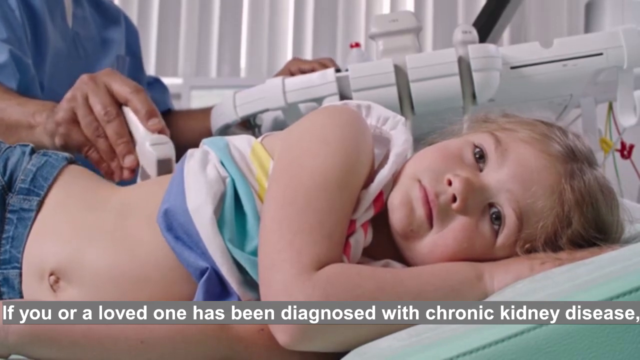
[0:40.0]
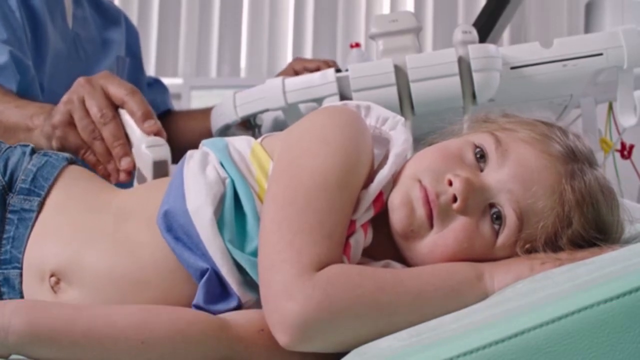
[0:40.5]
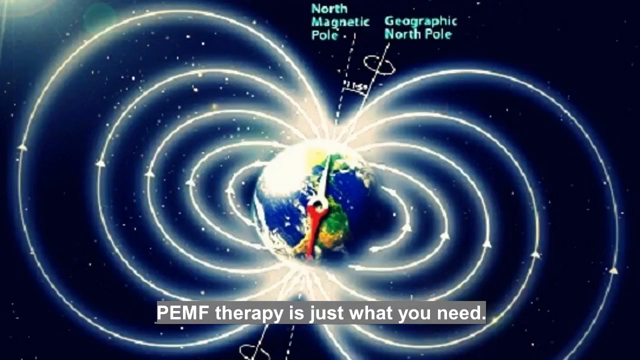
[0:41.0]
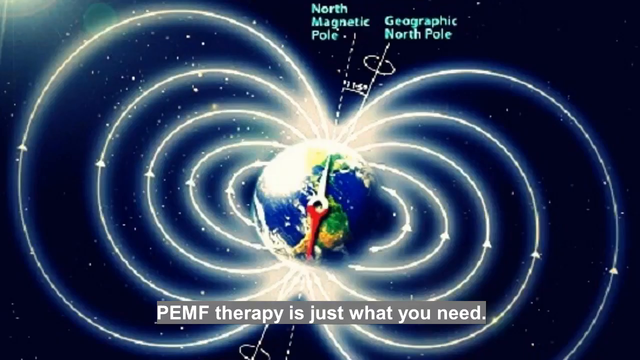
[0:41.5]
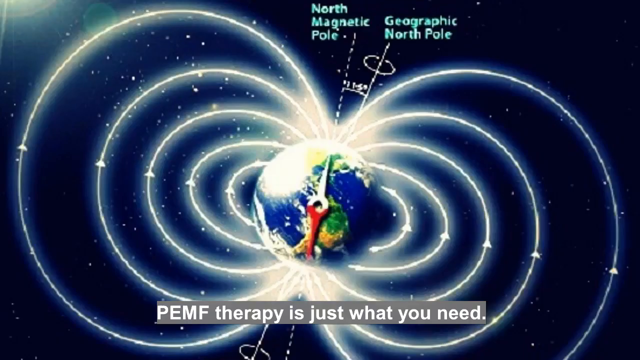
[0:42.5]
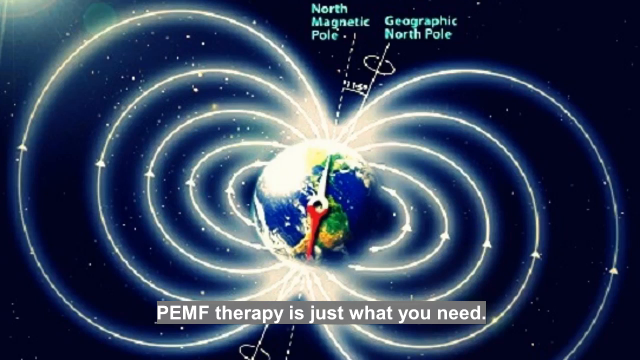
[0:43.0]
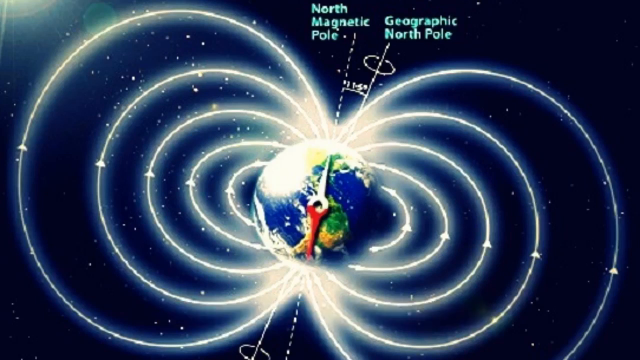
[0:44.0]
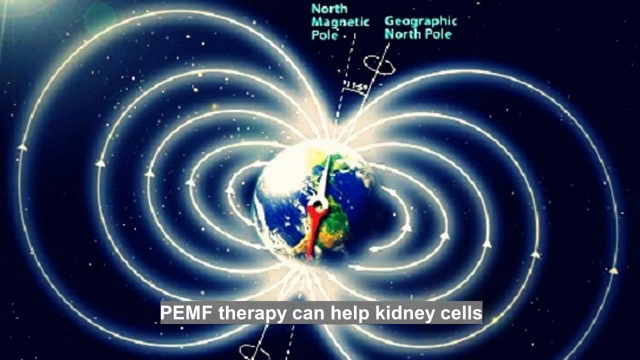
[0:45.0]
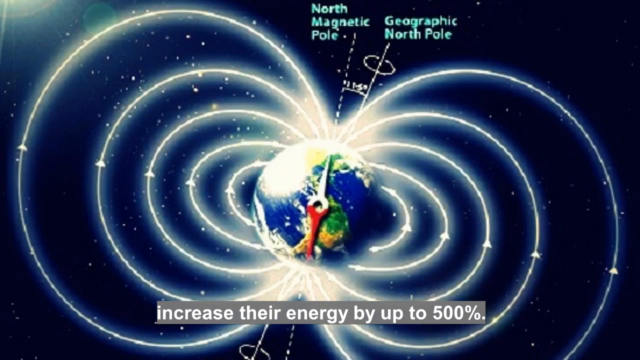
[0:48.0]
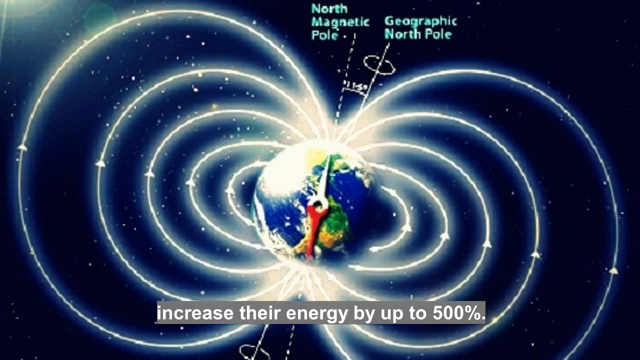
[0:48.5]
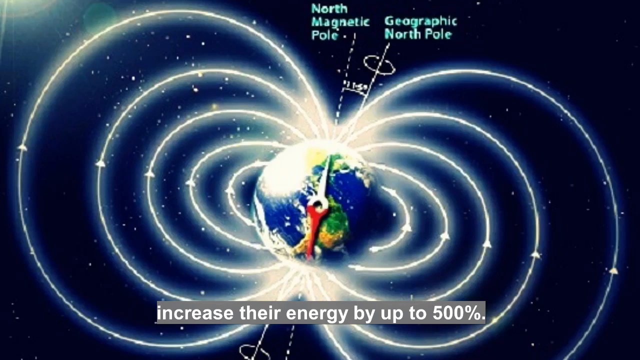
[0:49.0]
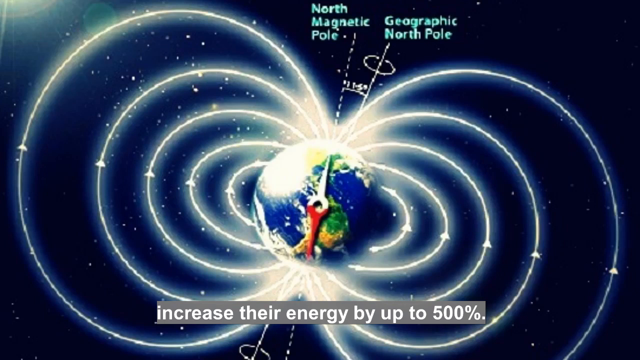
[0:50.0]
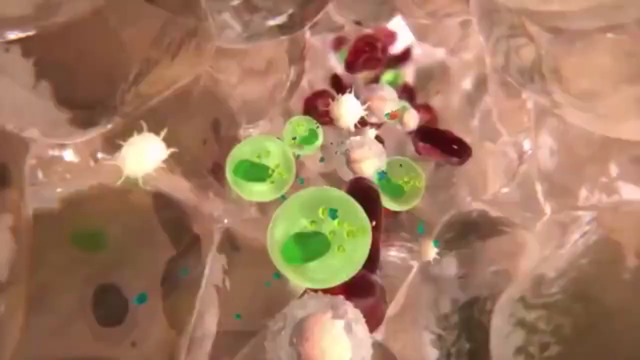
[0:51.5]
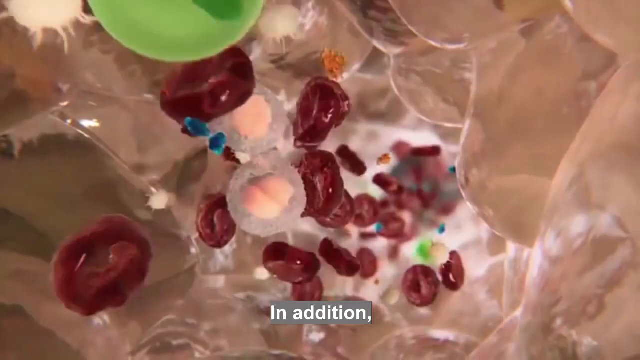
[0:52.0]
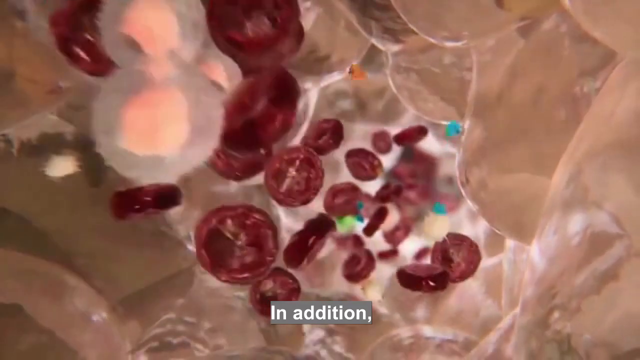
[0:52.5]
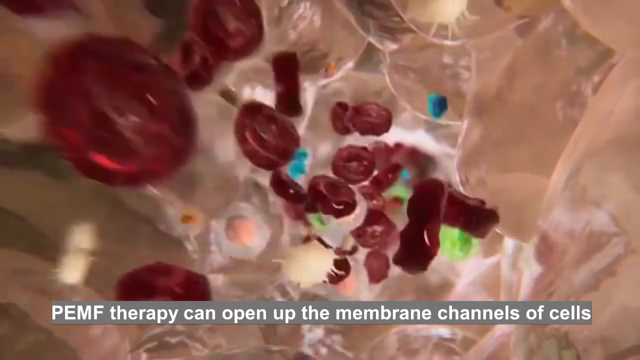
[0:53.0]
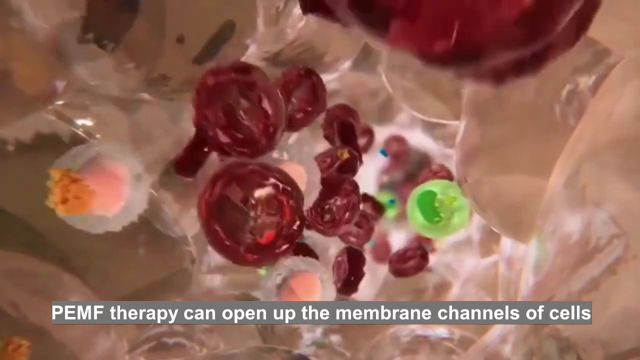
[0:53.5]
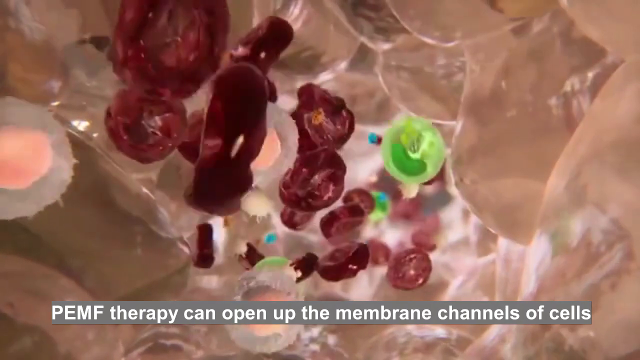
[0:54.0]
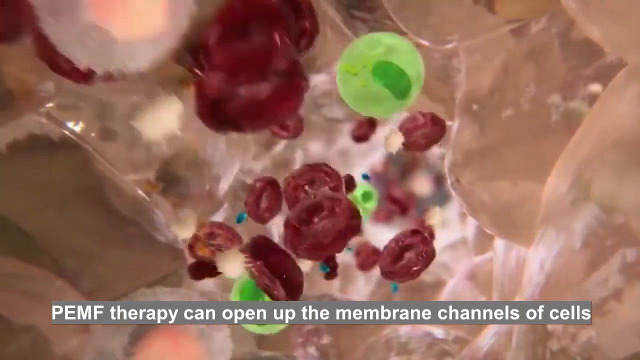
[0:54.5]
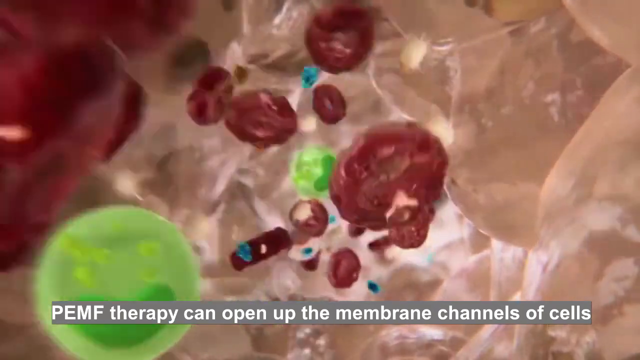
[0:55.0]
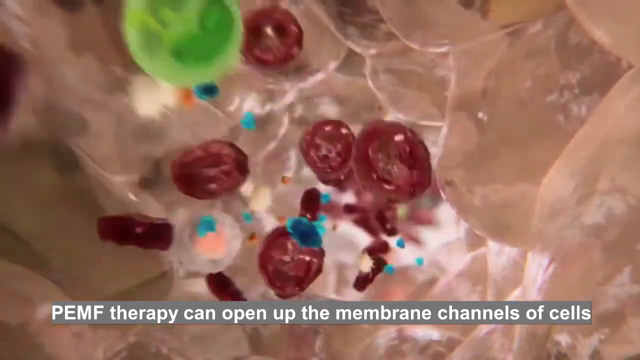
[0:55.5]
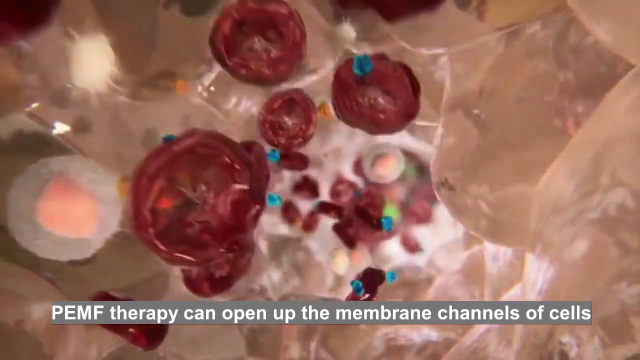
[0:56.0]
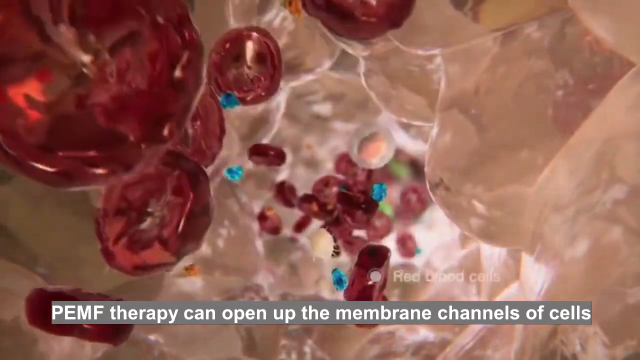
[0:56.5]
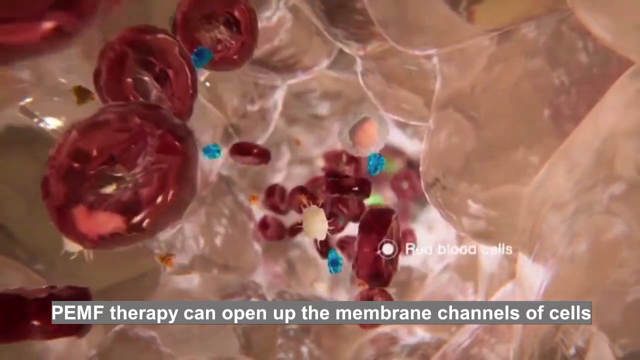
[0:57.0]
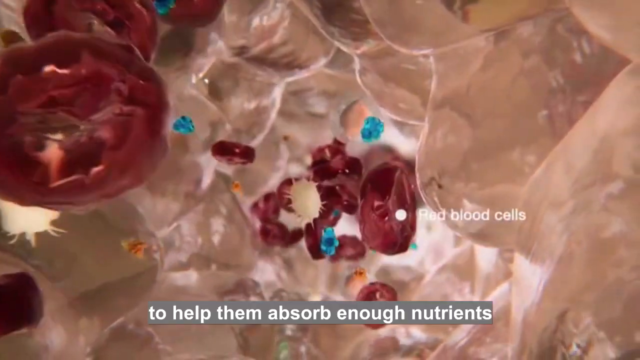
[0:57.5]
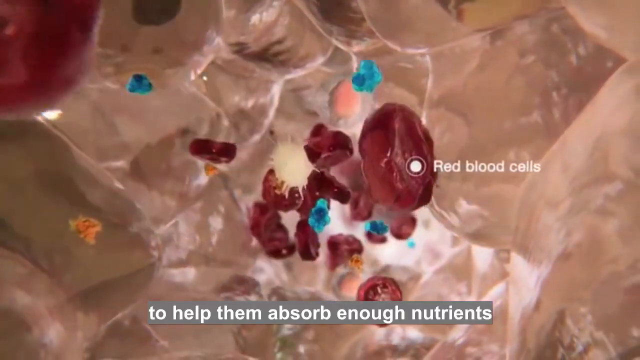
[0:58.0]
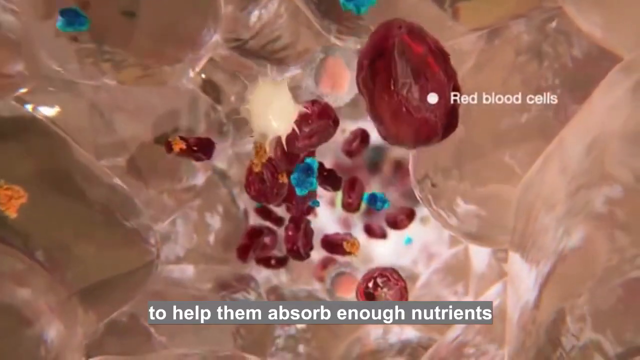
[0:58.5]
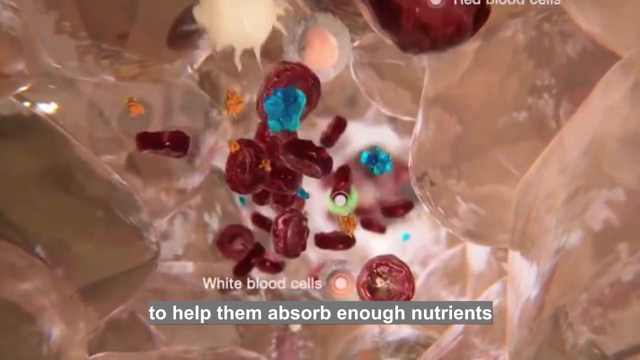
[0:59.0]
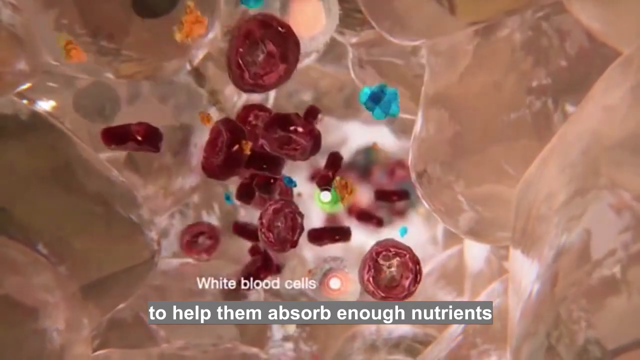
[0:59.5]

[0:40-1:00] The white child is still lying on their side, head facing roughly toward the camera but not really looking at it, while a person in the background who appears to be Black works on their kidneys. Text at the bottom reads "if you or a loved one have been diagnosed with chronic kidney disease, PEMF therapy is just what you need." Next comes a picture of the earth in space with something like magnetic waves coming off it, labeled "North Magnetic Pole" and "geographic North Pole" at the top. Text reads "PEMF therapy can help kidney cells increase their energy by up to 500%." The video cuts to a CGI interior shot of something like blood vessels with blood going through, or maybe kidneys filtering it, with the text "PEMF therapy can help open up membrane channels of cells." The shot holds. A red blood cell appears with small white text reading "red blood cells", and text at the bottom reads "to help them absorb enough nutrients." At the very end, a white blood cell is visible, labeled "white blood cell".